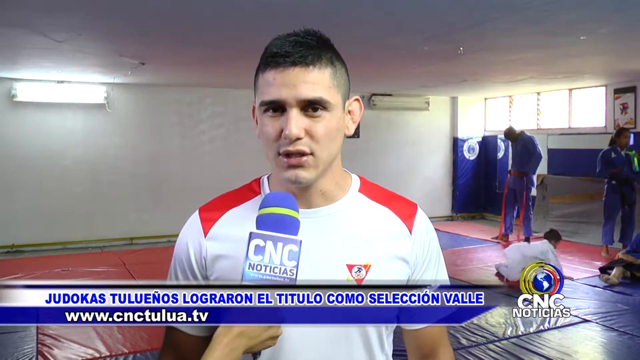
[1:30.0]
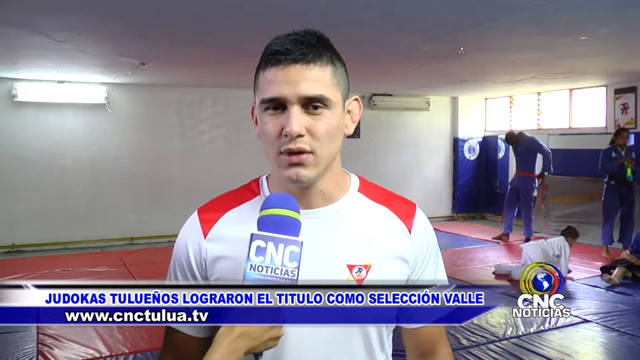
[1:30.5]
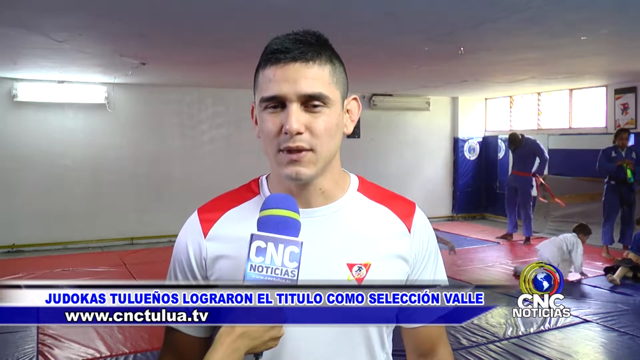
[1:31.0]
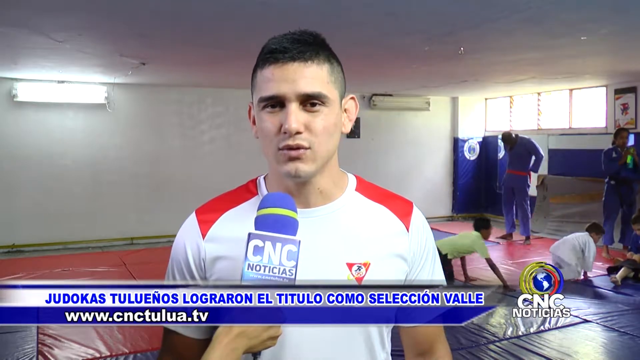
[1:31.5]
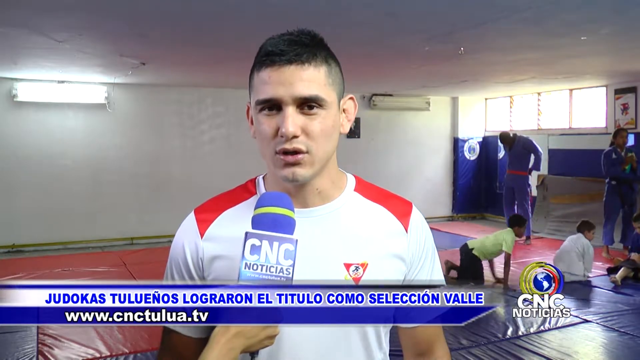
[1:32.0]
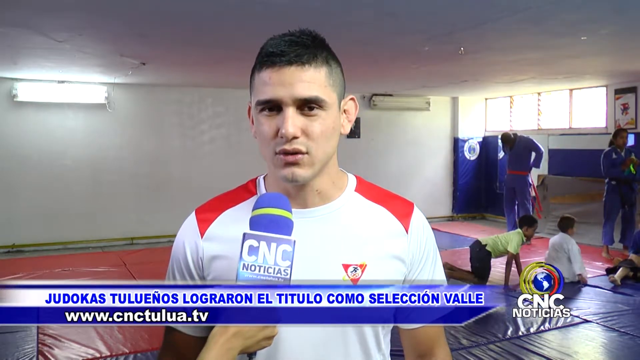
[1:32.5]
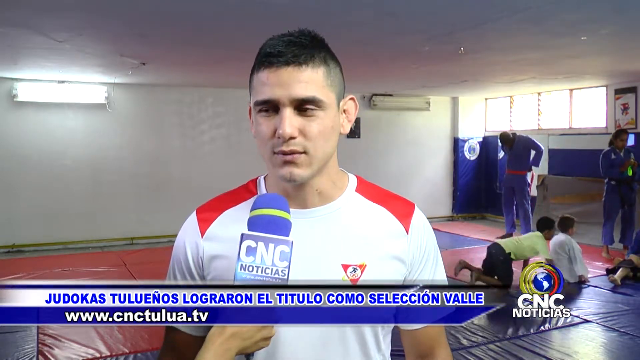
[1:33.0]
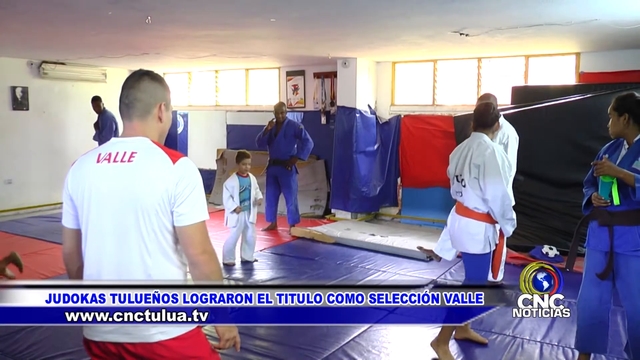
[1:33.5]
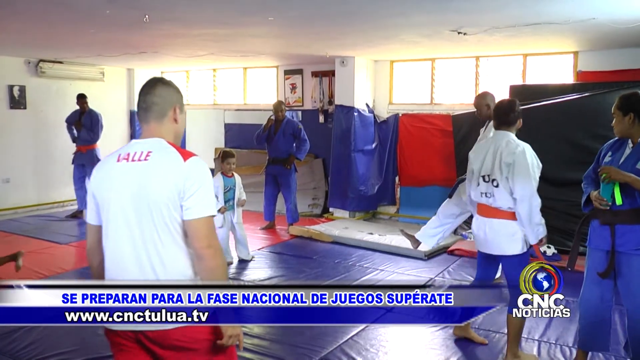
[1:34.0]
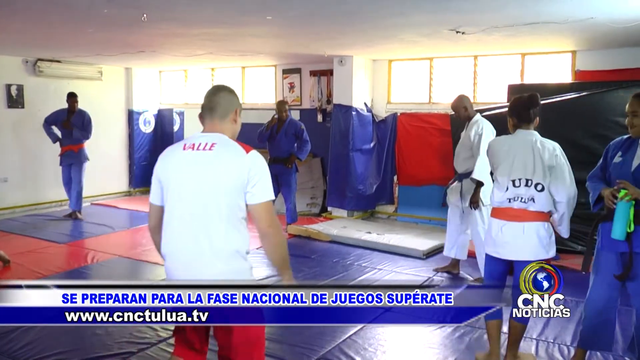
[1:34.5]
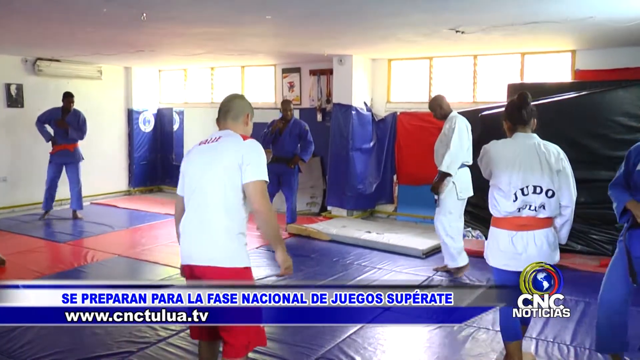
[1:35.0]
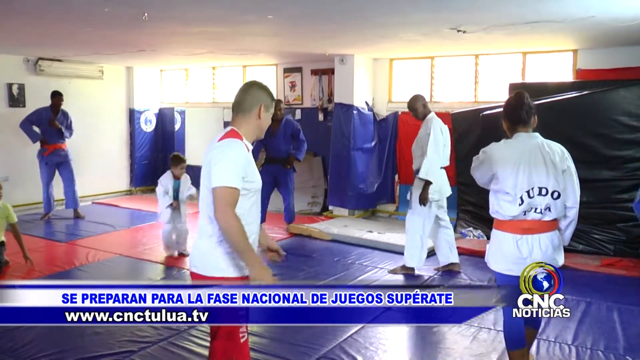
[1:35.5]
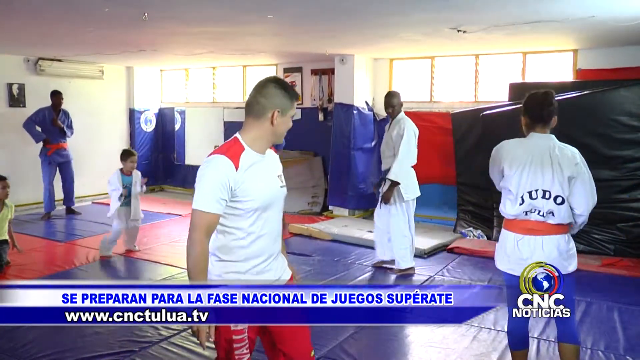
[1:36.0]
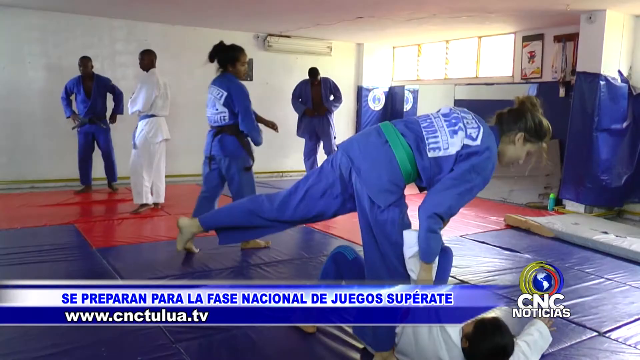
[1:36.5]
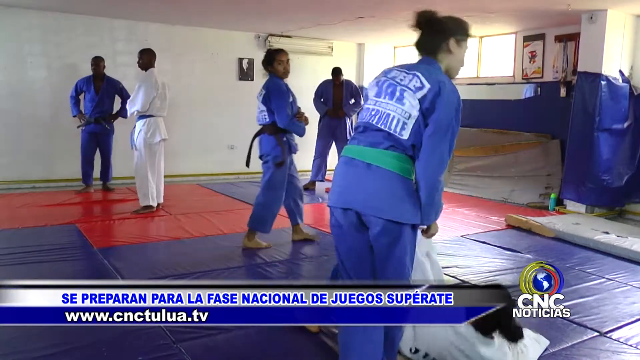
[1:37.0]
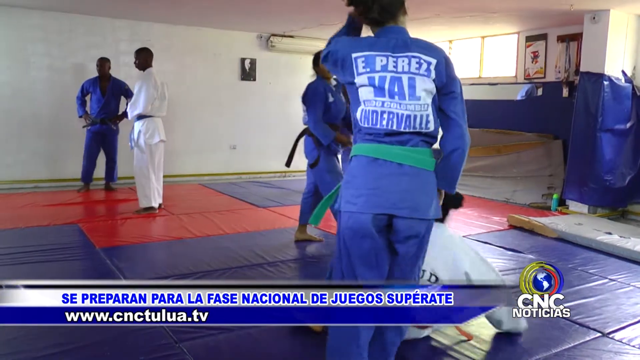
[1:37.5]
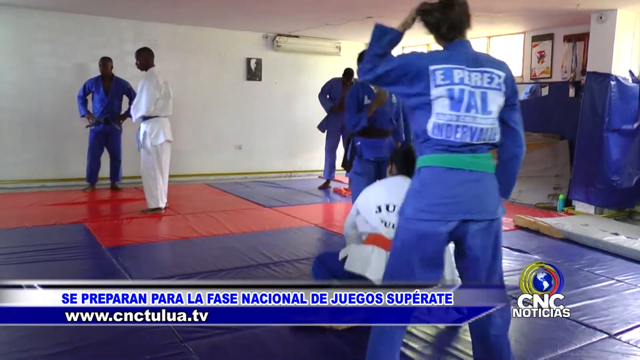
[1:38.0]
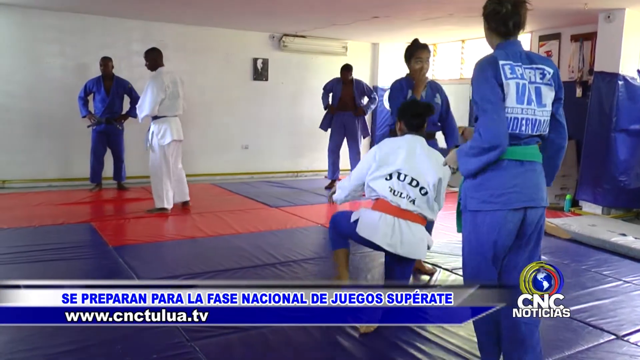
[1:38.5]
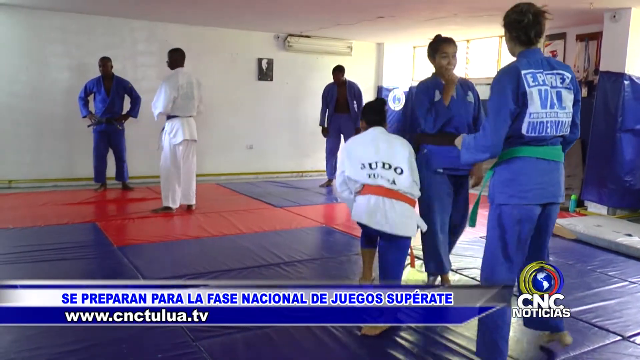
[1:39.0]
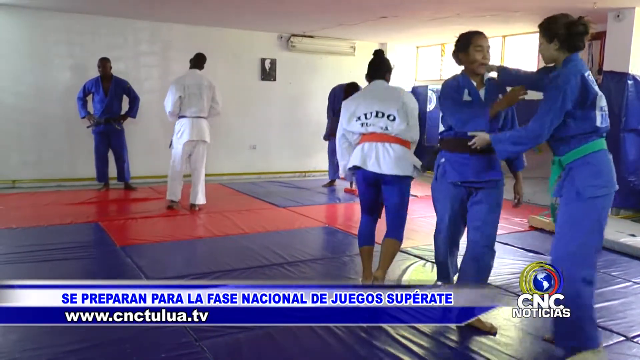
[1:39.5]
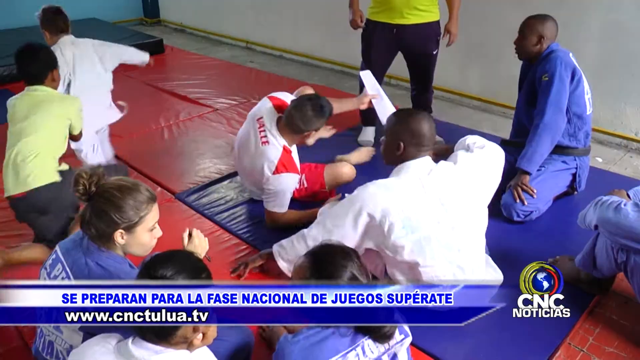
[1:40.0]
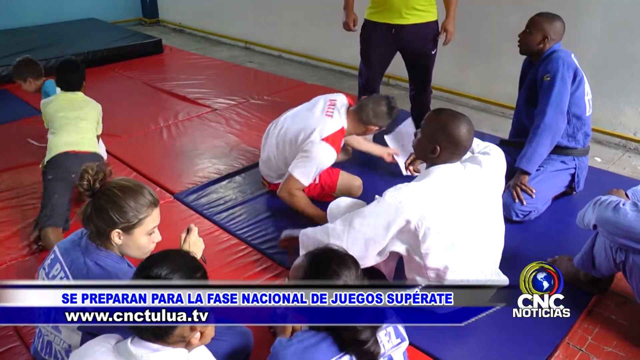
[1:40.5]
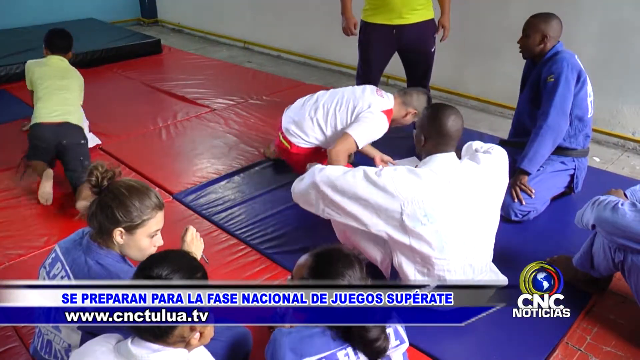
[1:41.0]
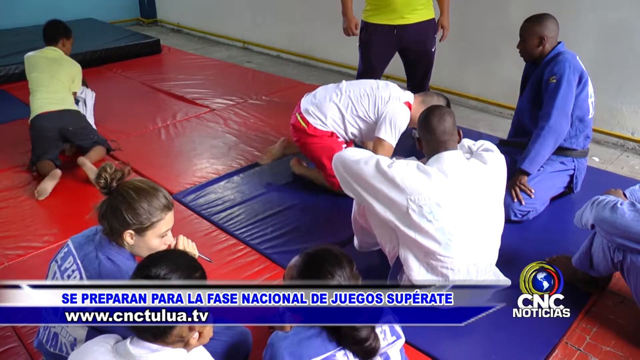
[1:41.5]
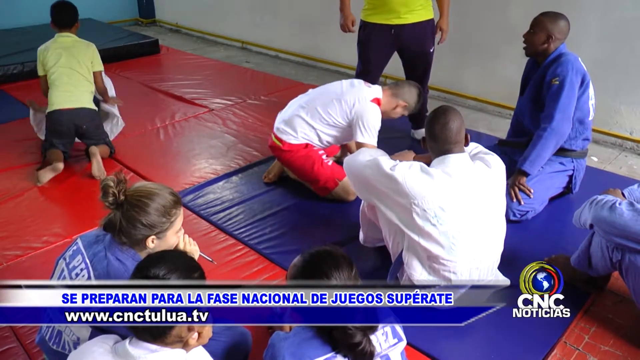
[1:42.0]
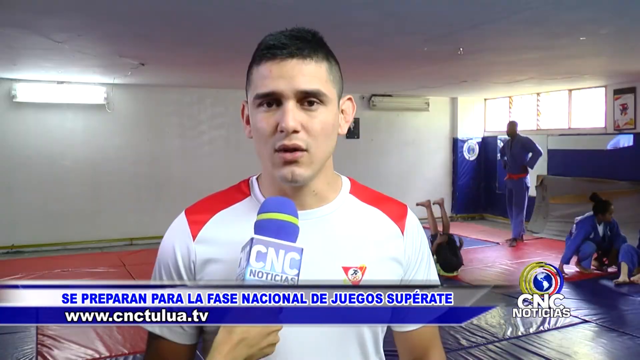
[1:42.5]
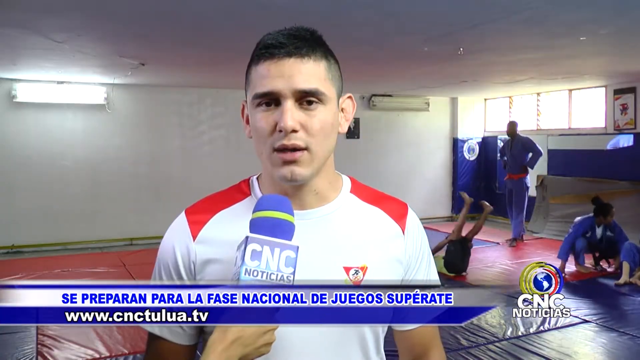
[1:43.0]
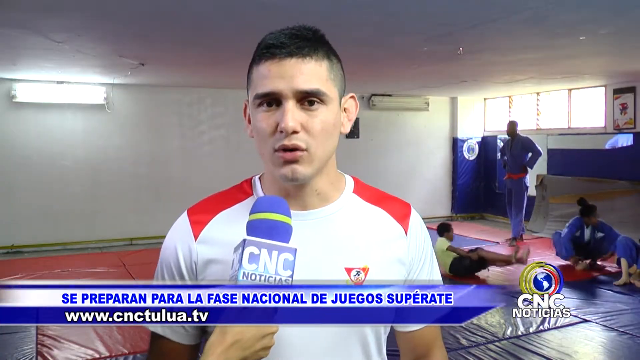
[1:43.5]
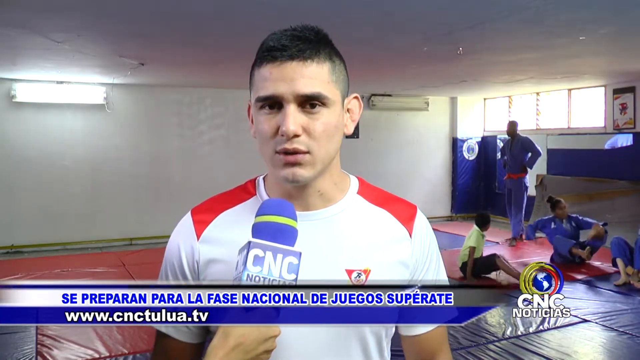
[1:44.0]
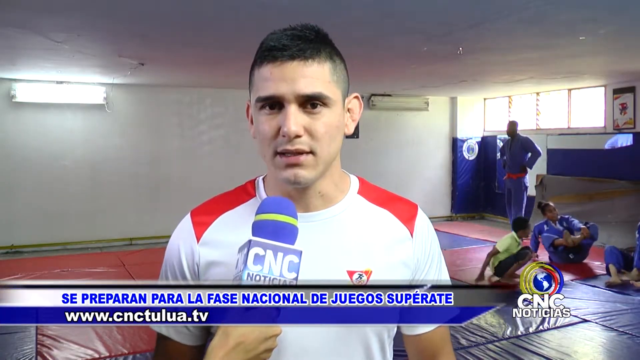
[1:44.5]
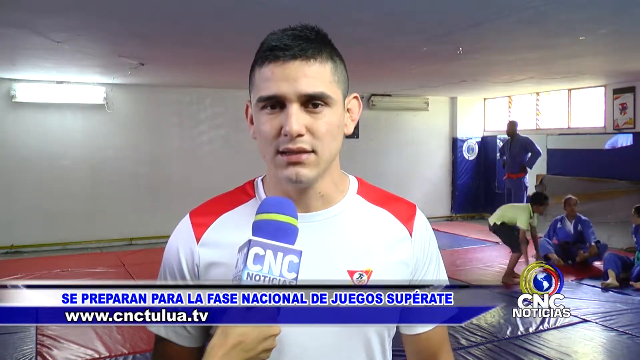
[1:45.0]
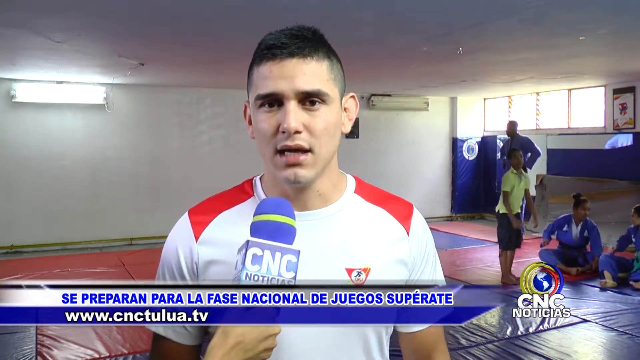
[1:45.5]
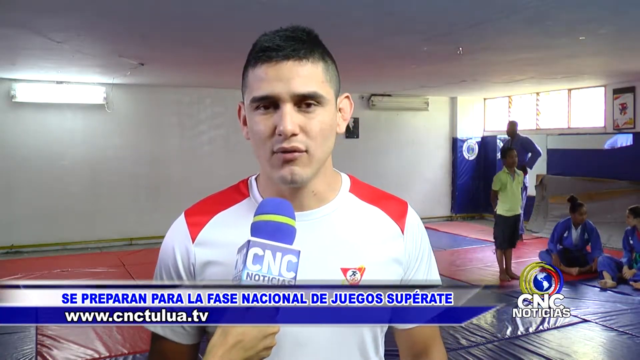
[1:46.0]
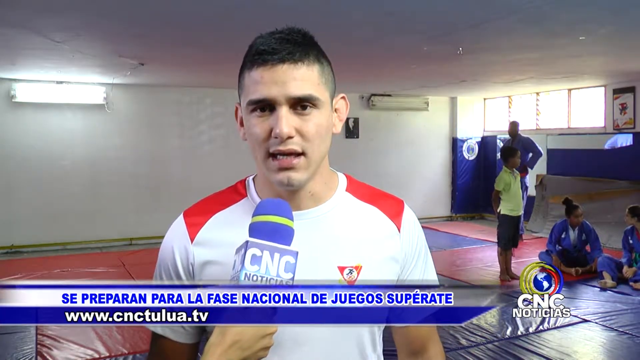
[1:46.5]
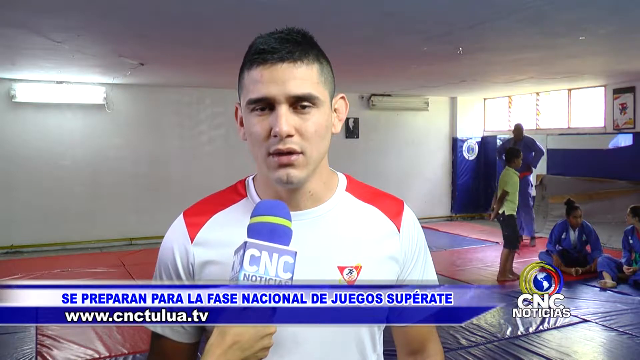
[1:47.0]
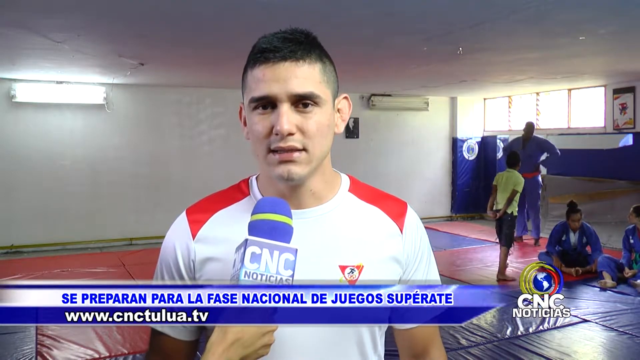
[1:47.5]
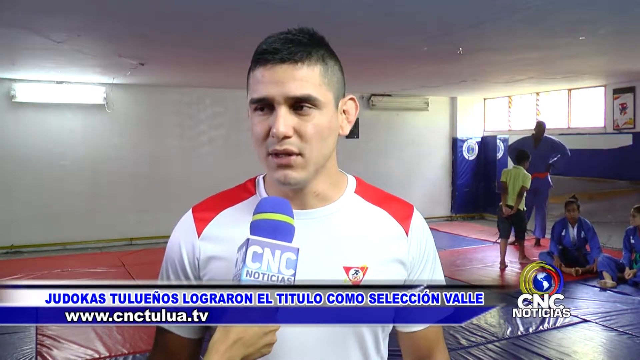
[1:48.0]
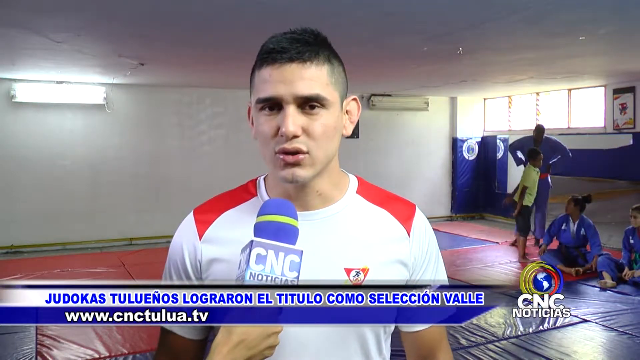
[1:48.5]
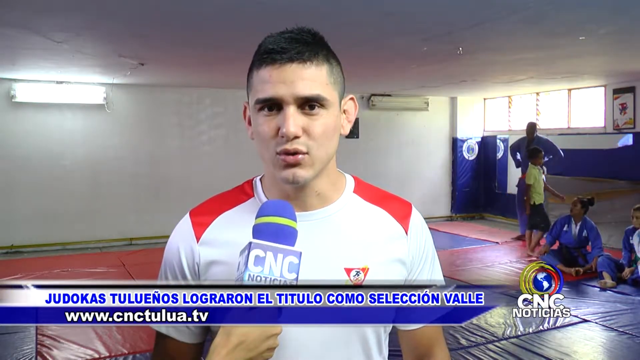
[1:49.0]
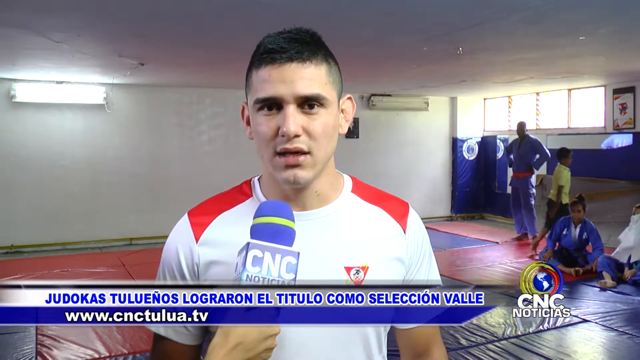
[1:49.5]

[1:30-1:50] The trainer is still giving his interview. From a new angle, in a new scene, he is surrounded by students walking around the mats. Then the young women are sparring again, tripping each other up, as a student in a white judo outfit stands back up, and two more women embrace, ready to spar. The same young man is now tying his red belt around his waist. The man giving the interview has noticeable cauliflower ear. The back of the trainer's shirt reads "valet" in red lettering. In footage where he sits on the mat with students around him, he holds a white piece of paper and is about to write something before the video cuts back to him giving the interview, looking straight into the camera and speaking.